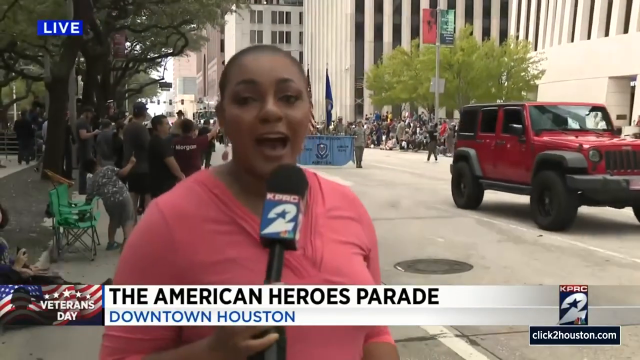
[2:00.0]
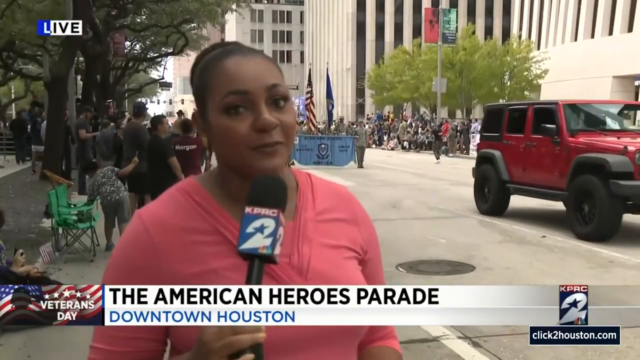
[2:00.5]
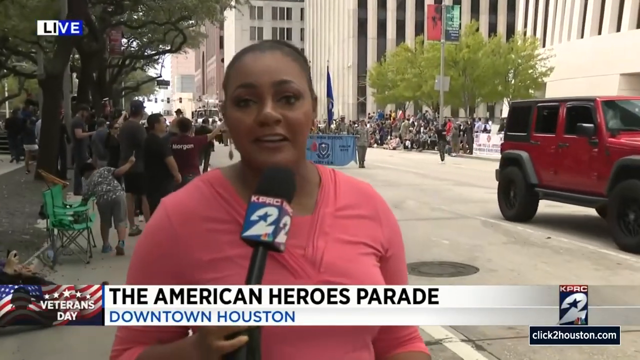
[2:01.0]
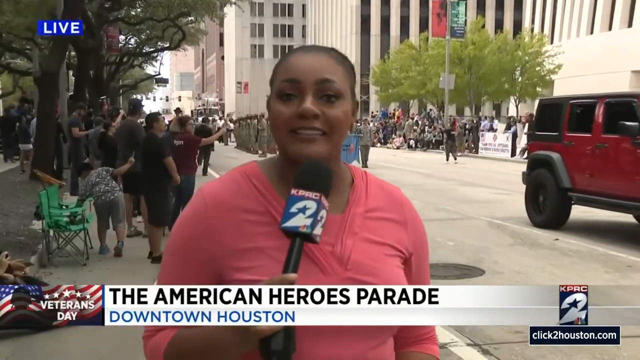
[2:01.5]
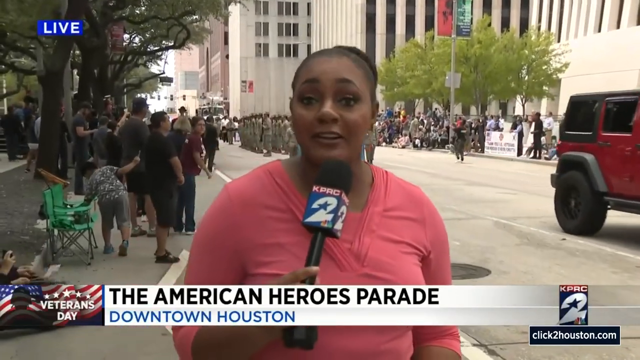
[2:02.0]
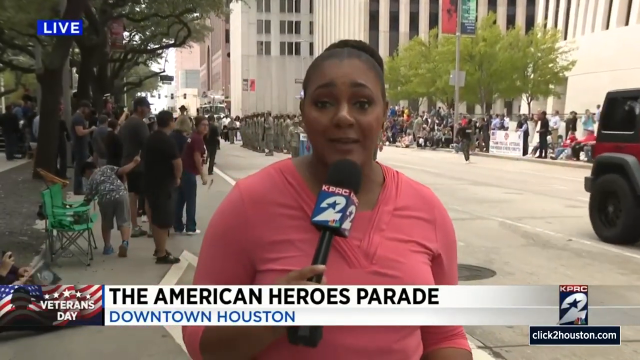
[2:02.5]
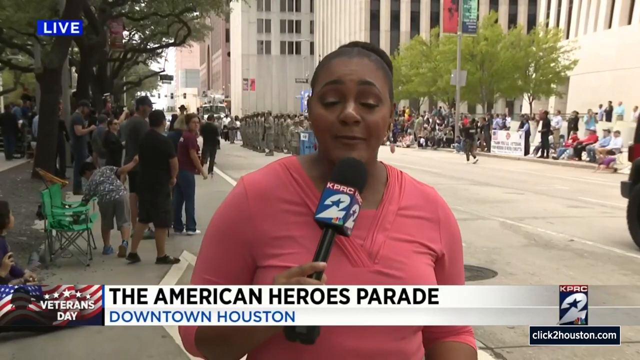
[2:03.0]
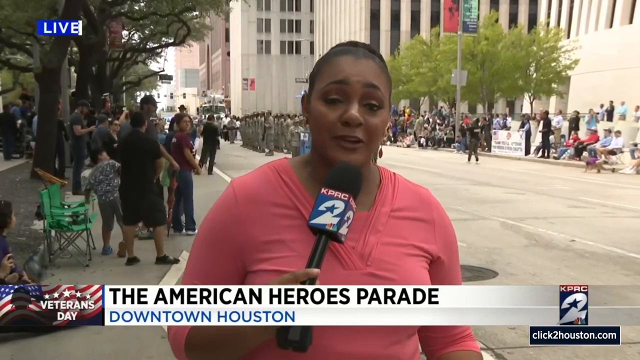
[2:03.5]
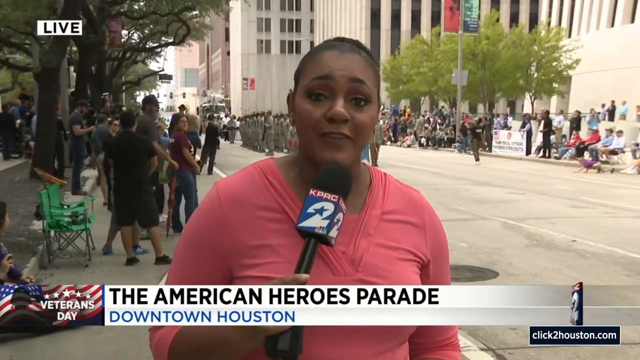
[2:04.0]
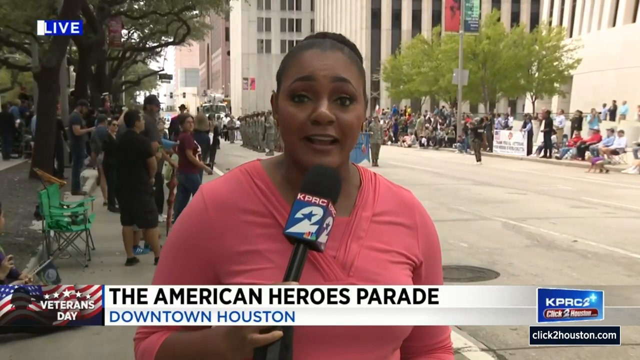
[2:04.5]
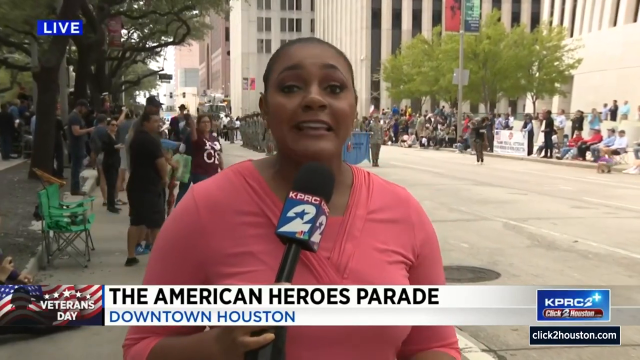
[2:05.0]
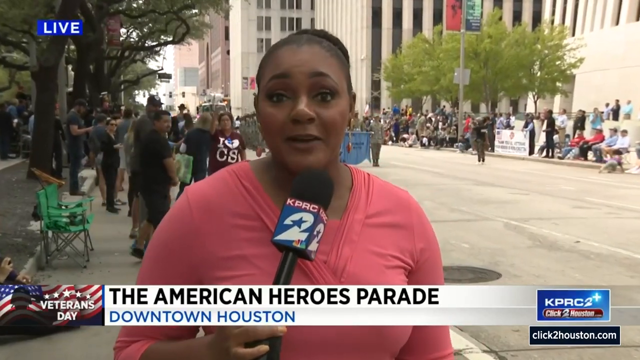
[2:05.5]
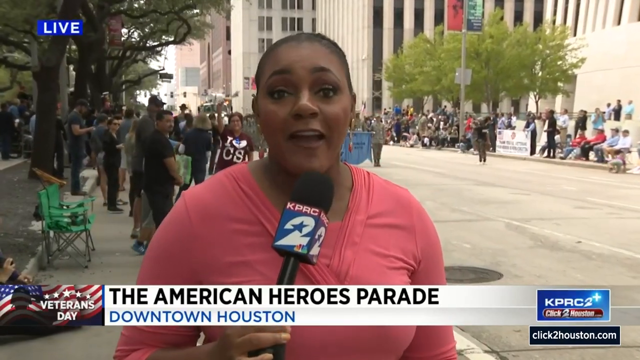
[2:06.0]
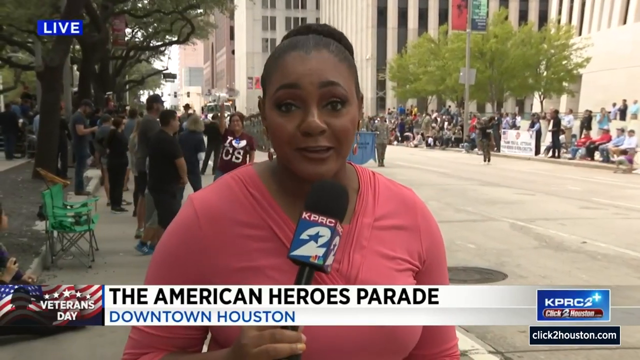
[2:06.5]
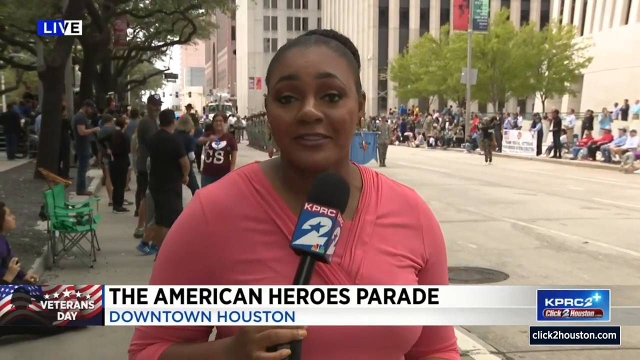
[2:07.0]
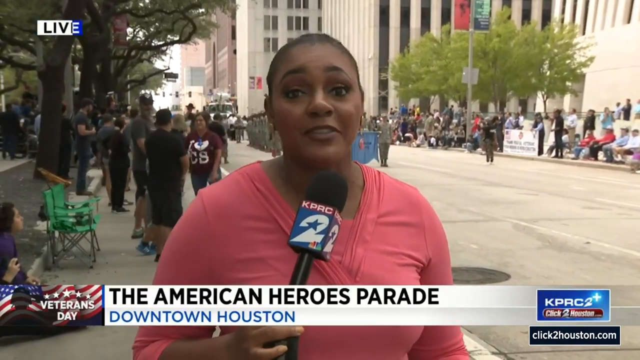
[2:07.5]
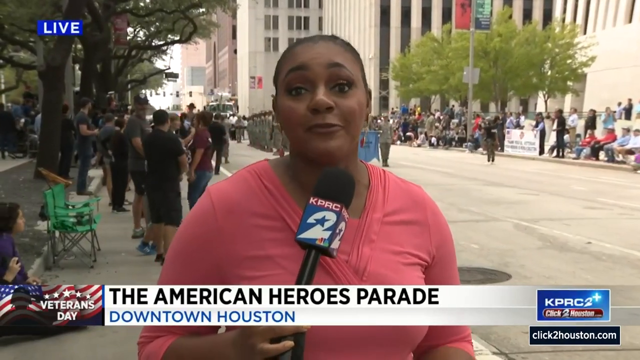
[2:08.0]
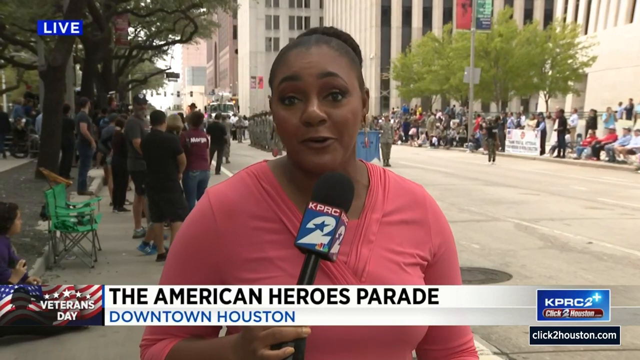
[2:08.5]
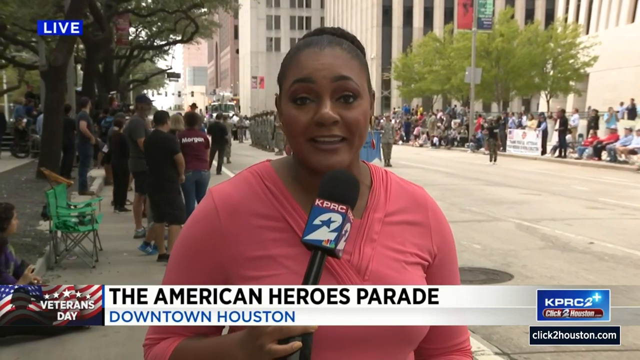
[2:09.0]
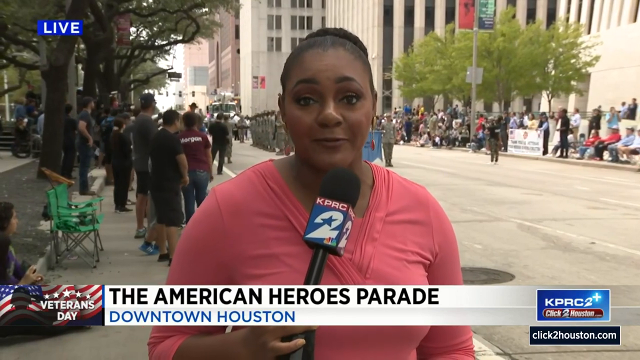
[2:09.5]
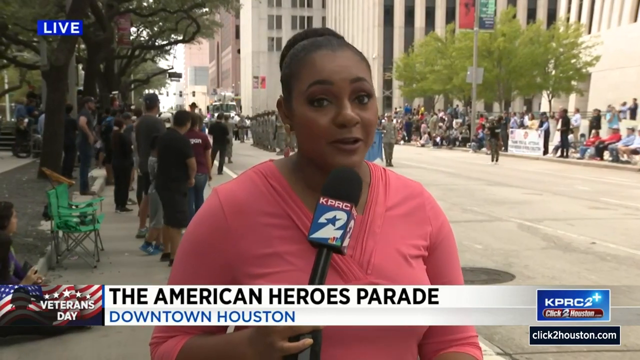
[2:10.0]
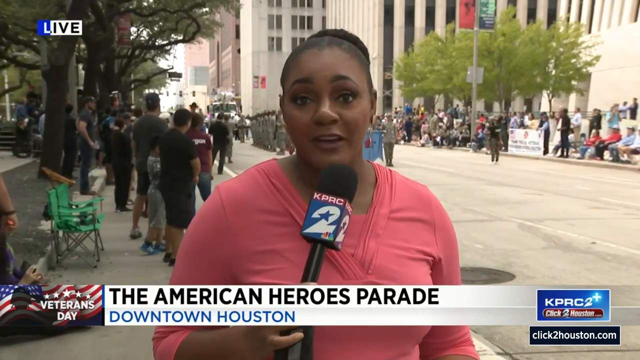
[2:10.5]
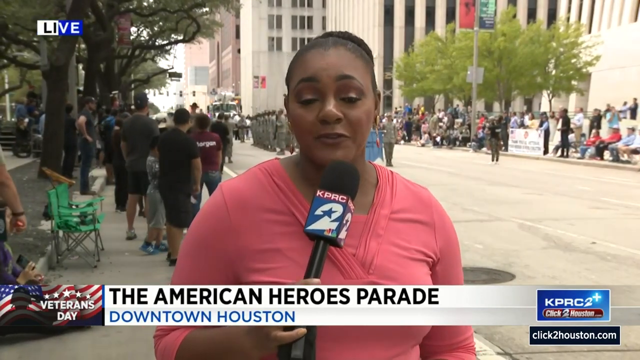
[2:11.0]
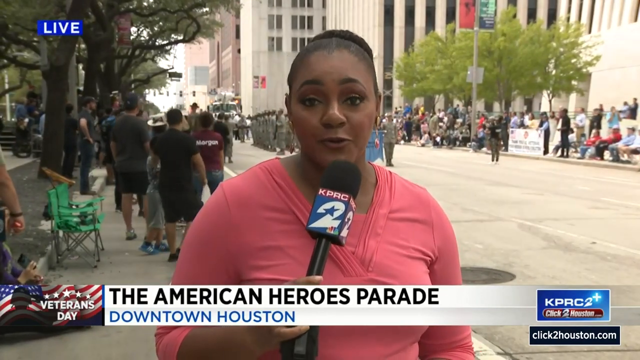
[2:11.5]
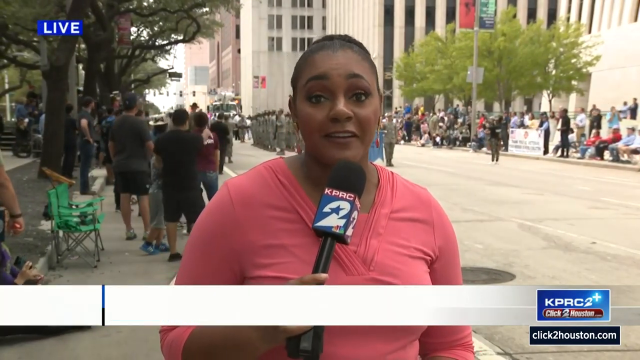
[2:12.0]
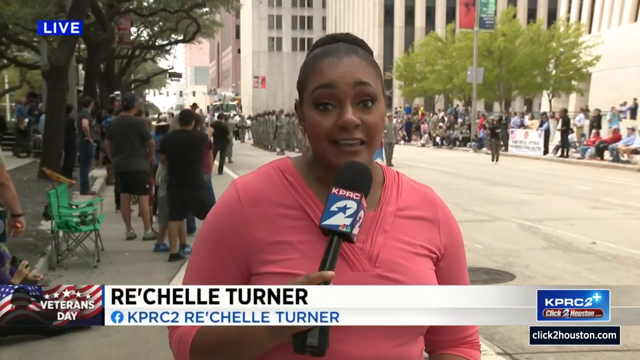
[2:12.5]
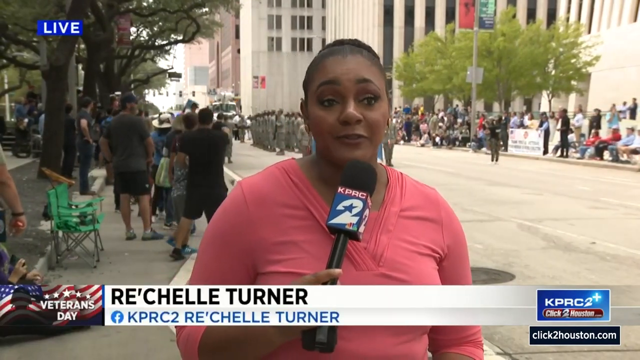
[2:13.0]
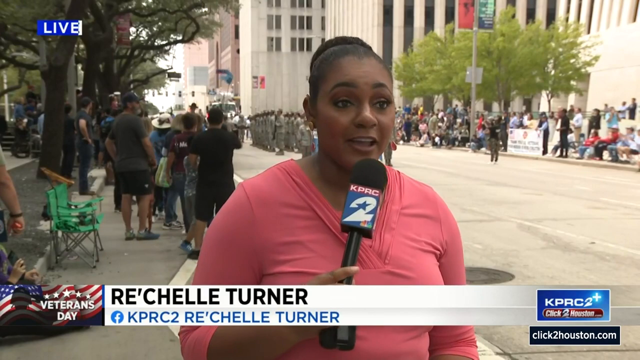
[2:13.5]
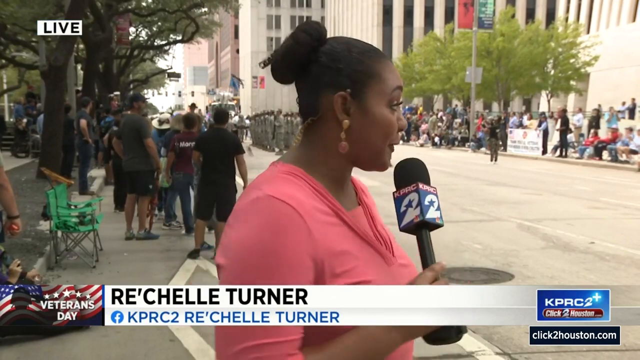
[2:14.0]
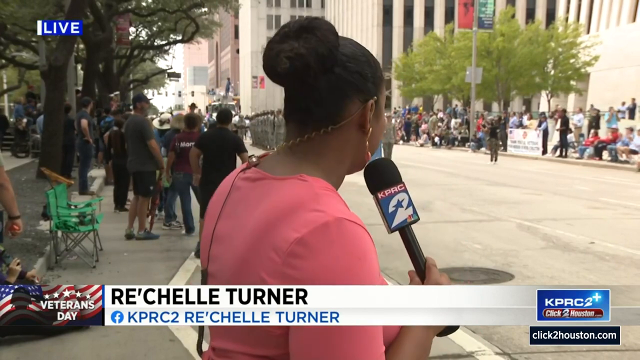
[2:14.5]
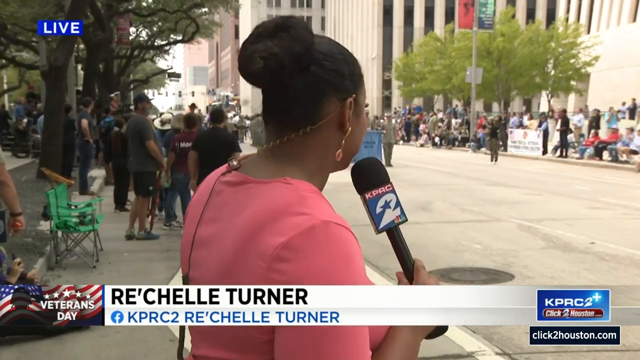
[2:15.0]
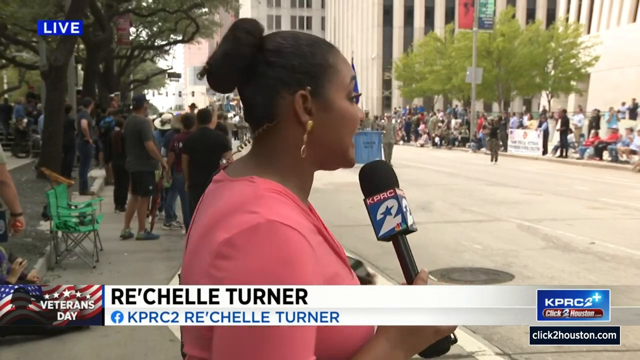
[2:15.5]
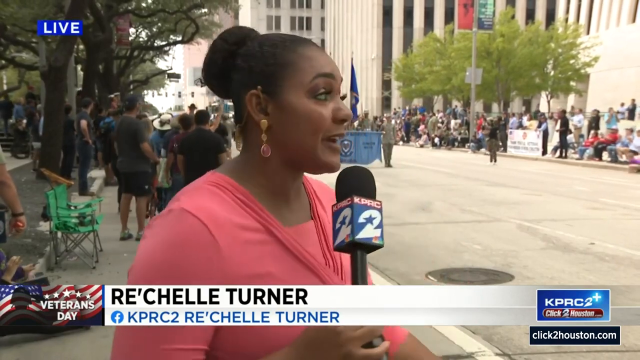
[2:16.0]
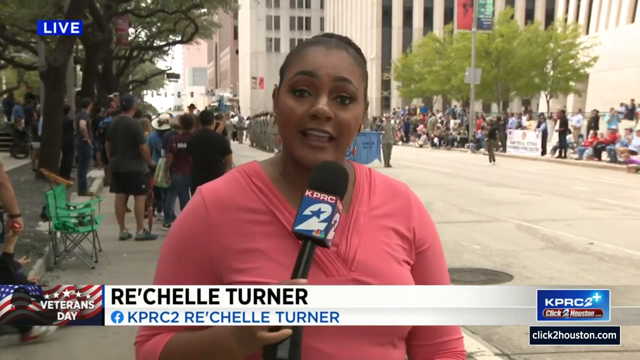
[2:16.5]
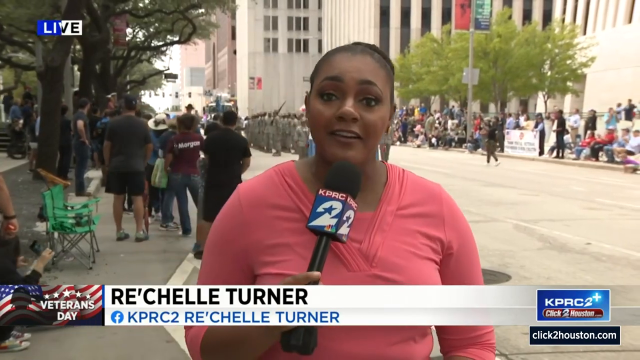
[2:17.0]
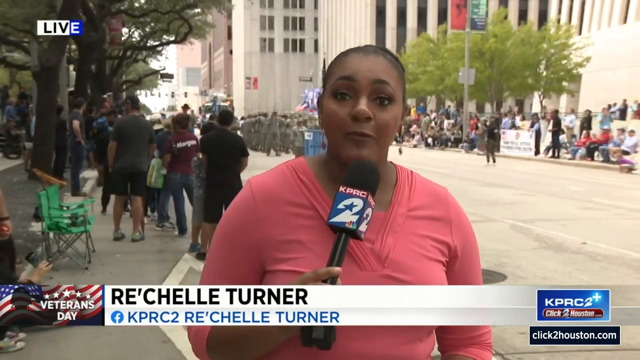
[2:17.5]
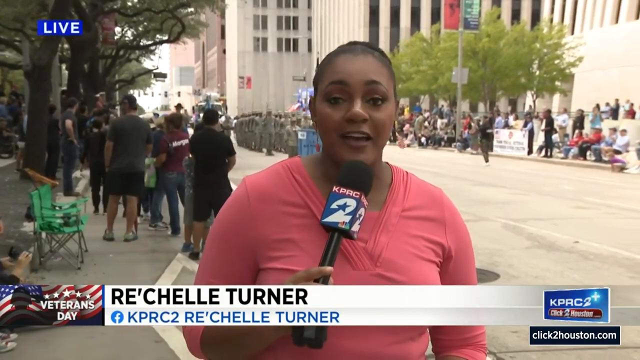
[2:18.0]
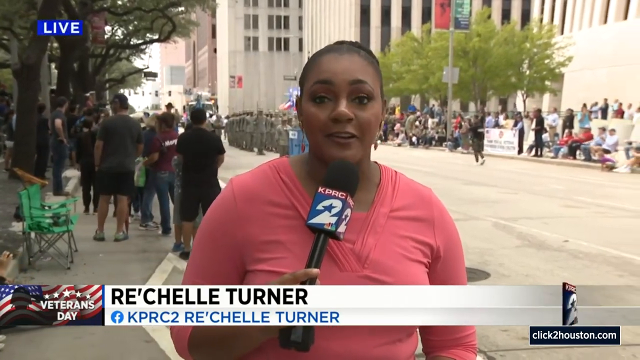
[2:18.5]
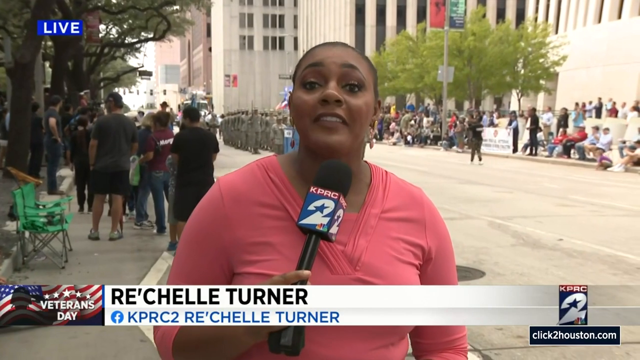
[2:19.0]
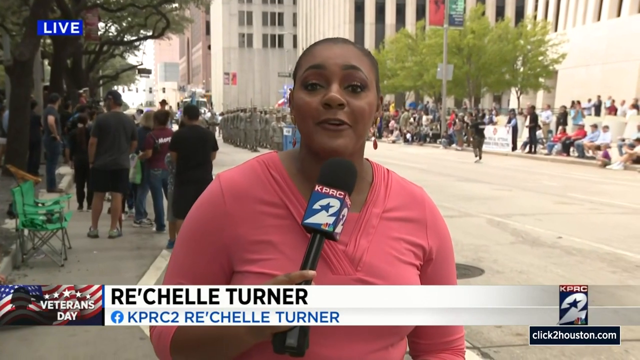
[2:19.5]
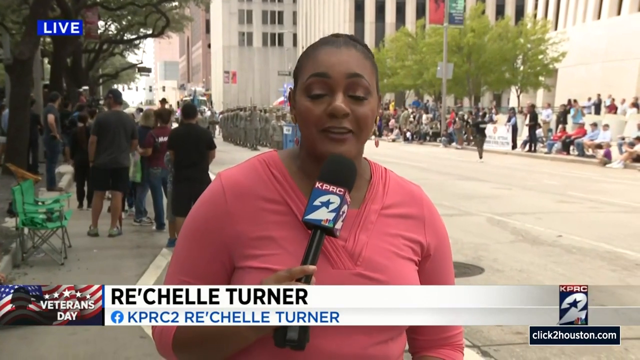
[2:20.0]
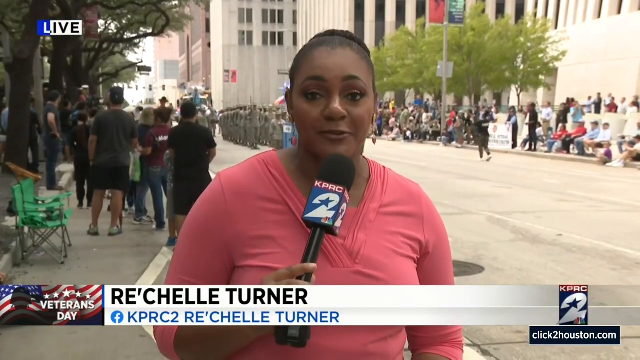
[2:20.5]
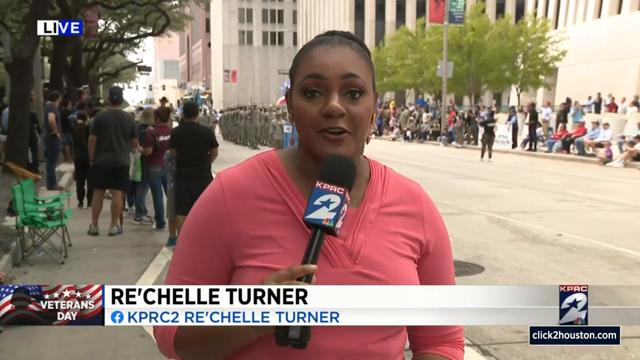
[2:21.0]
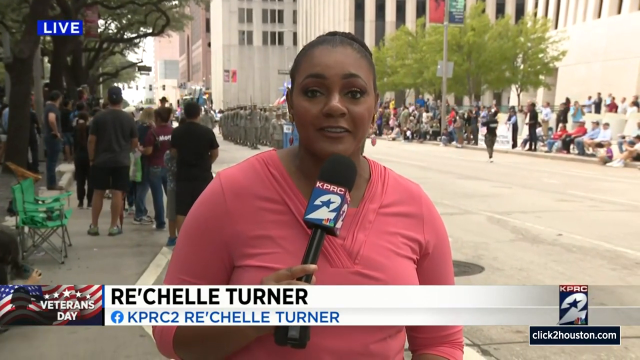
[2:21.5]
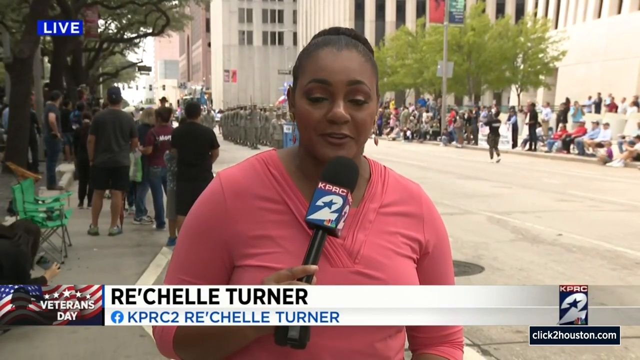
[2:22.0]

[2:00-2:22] The ROTC group continues as the newscaster speaks directly into the camera. Behind her, multiple spectators realize there is a news camera and begin waving into it. On screen is the newscaster's name, "Rochelle Turner," and below it a Facebook logo with "KPRC2 Rochelle Turner." The banner then changes to read "the American Heroes Parade Downtown Houston" with the Veterans Day logo, a logo that says "Live" at the top left of the screen, and the KPRC2 channel logo and click to houston.com at the bottom right. The newscaster wears a pink V-neck top with sleeves to about her elbows; she appears to be in her 30s, is Black, wears her hair in a close bun, and has short, unpainted fingernails. Her microphone is wrapped with a KPRC2 logo and has a small NBC logo in the corner. Behind her, spectators on both sides of the street stand as the ROTC group turns to the crowd and performs its formation. People behind her wave flags and other items, and on realizing the camera is filming for television, they cheer and wave behind the newscaster.